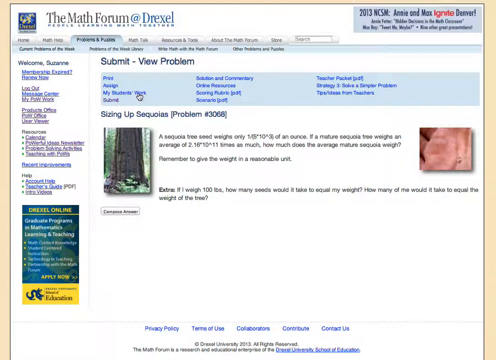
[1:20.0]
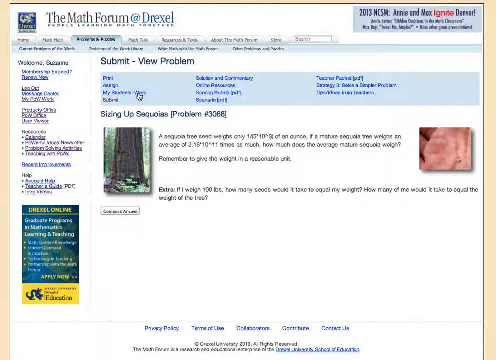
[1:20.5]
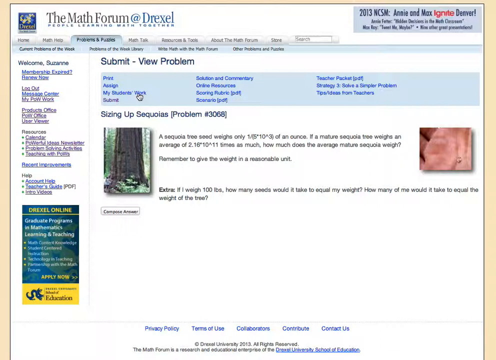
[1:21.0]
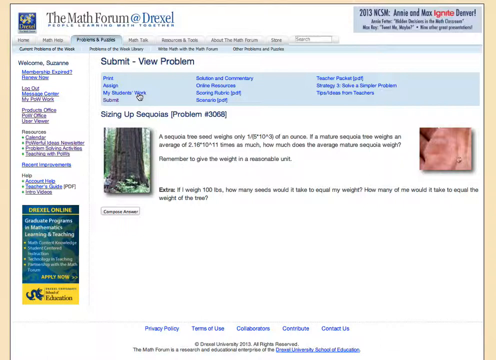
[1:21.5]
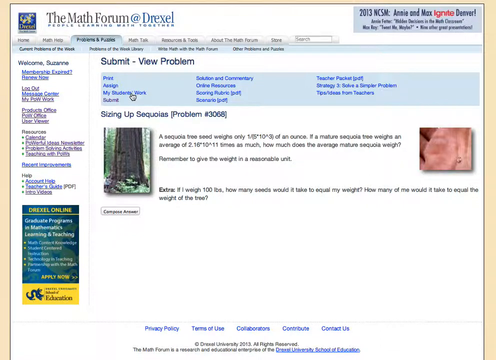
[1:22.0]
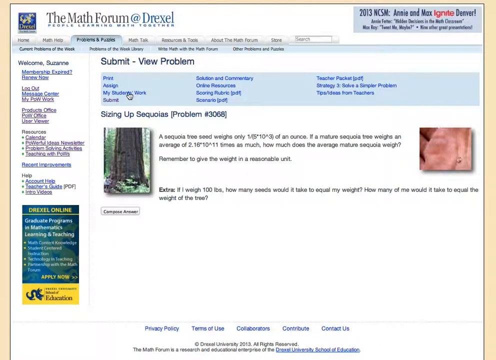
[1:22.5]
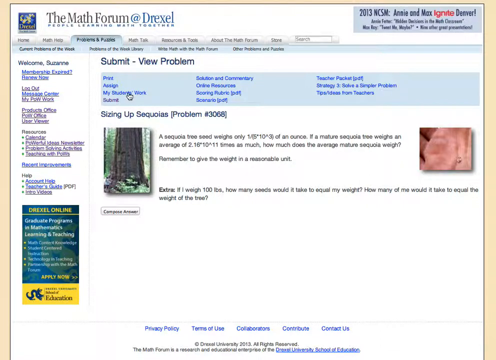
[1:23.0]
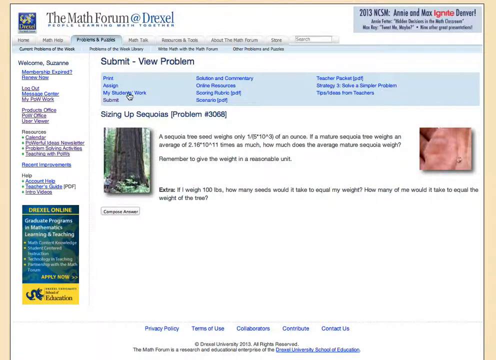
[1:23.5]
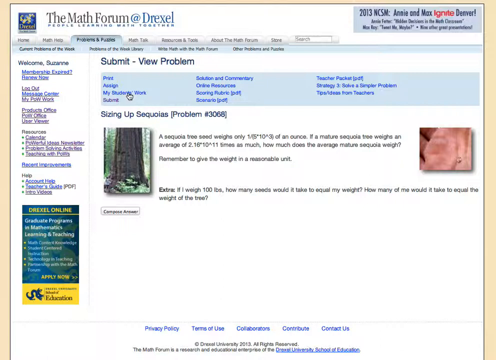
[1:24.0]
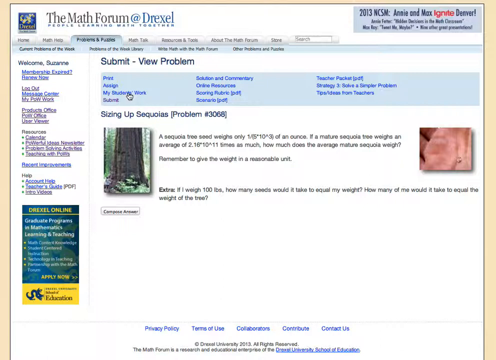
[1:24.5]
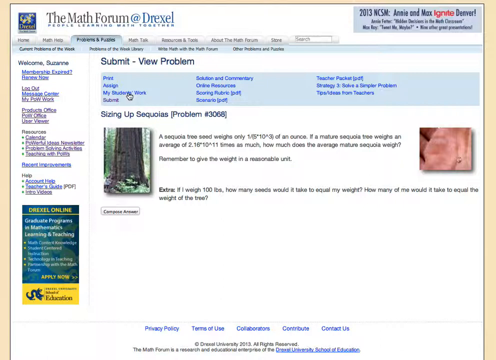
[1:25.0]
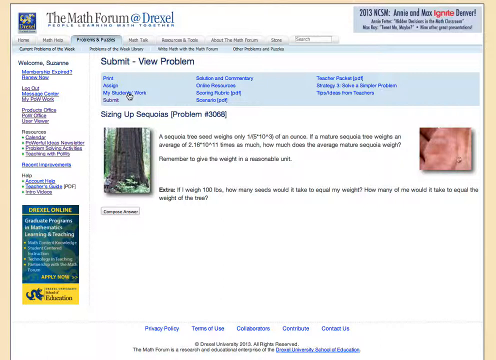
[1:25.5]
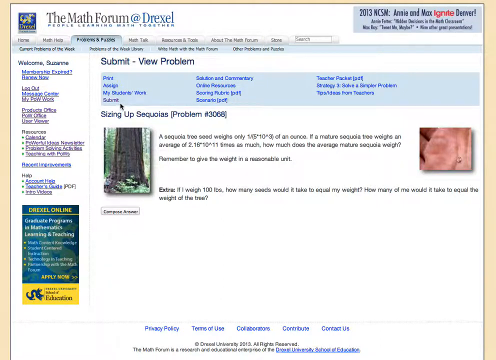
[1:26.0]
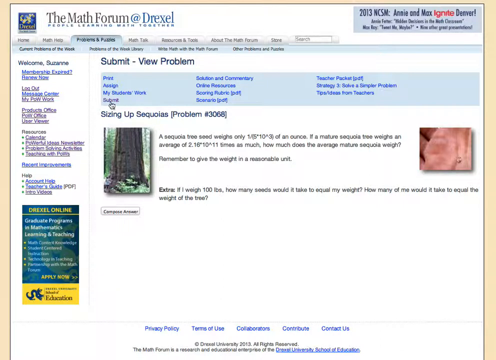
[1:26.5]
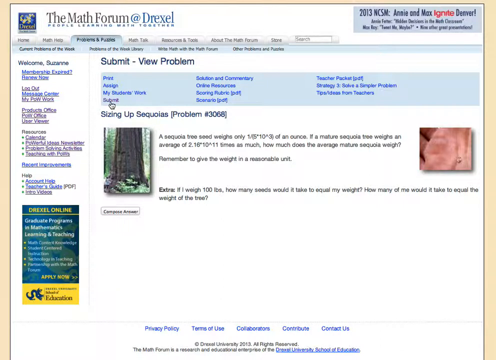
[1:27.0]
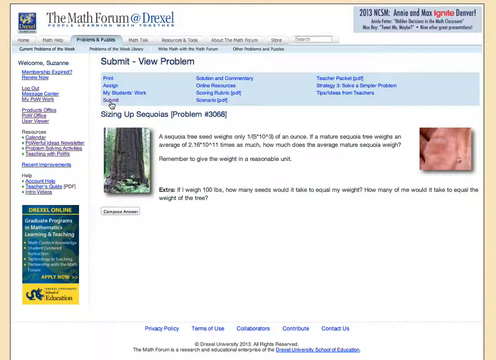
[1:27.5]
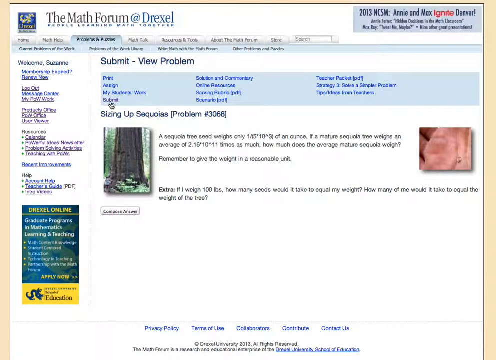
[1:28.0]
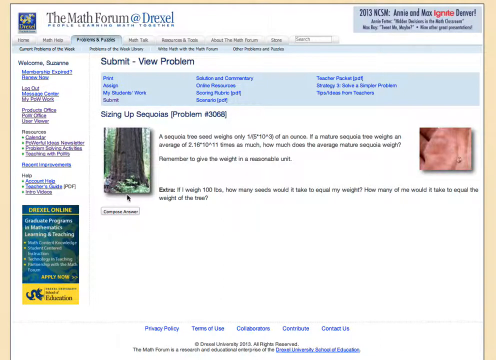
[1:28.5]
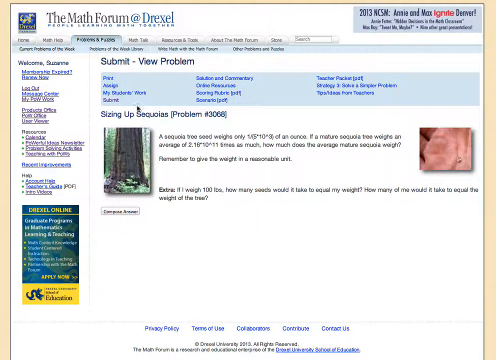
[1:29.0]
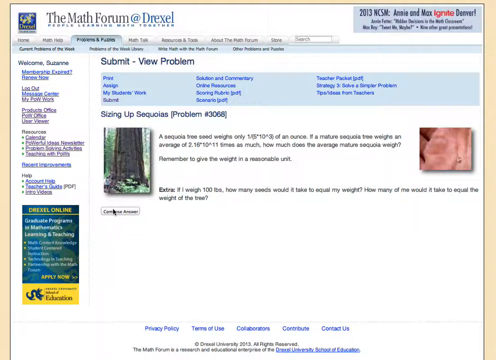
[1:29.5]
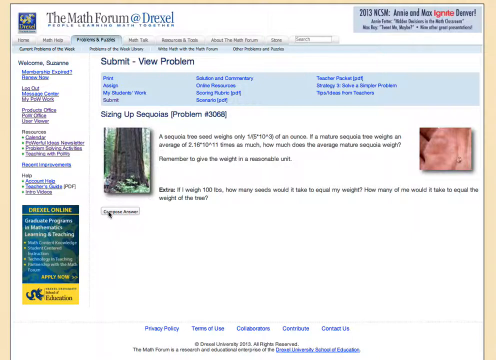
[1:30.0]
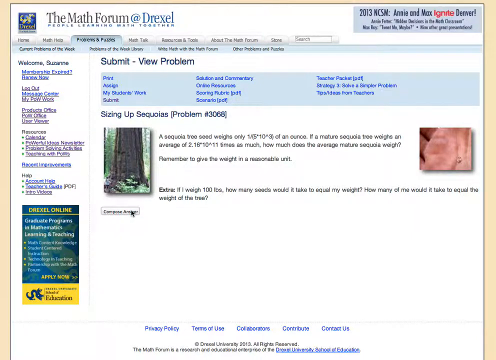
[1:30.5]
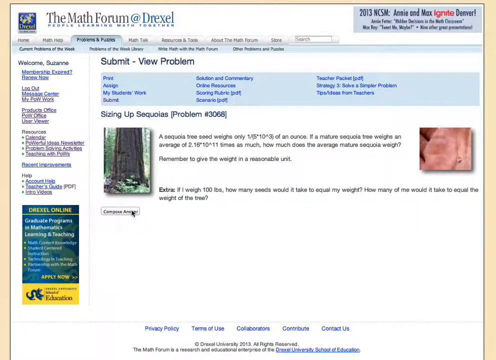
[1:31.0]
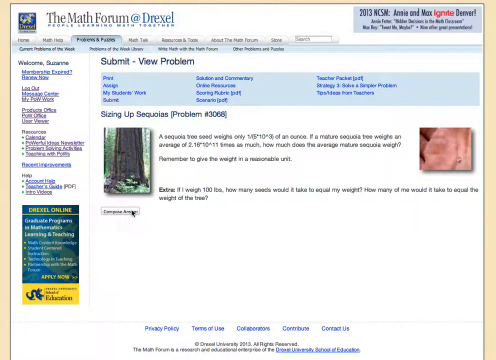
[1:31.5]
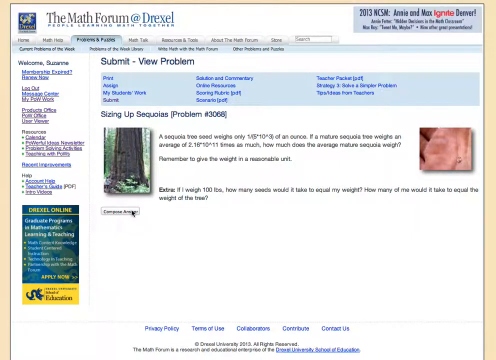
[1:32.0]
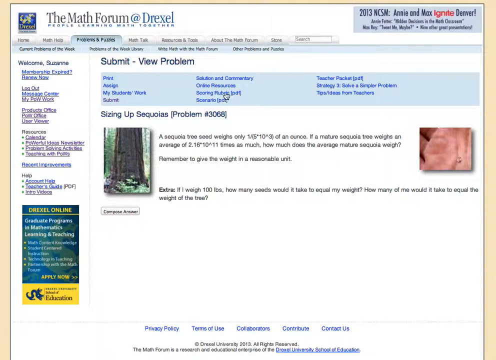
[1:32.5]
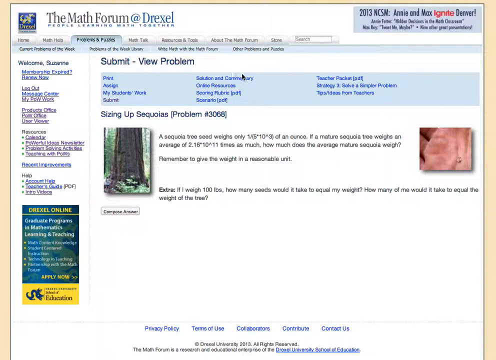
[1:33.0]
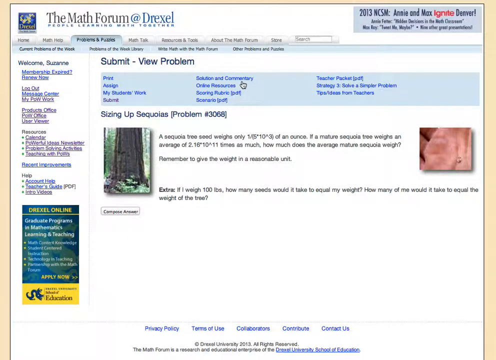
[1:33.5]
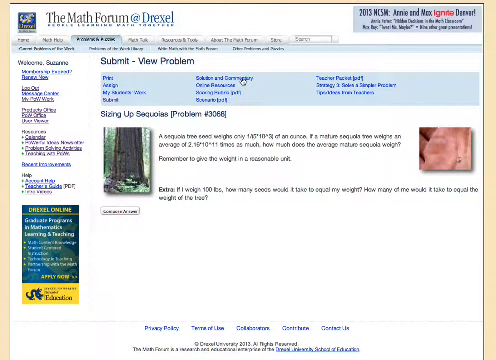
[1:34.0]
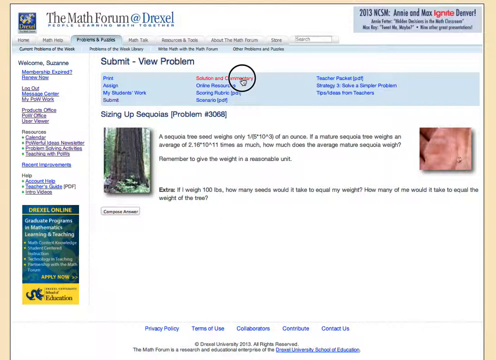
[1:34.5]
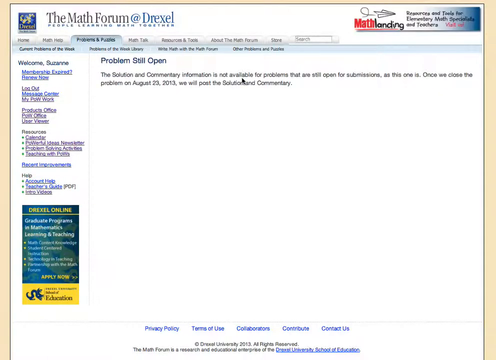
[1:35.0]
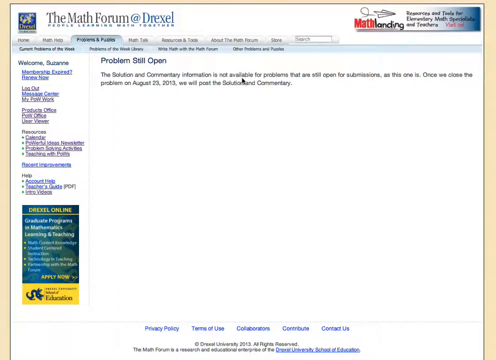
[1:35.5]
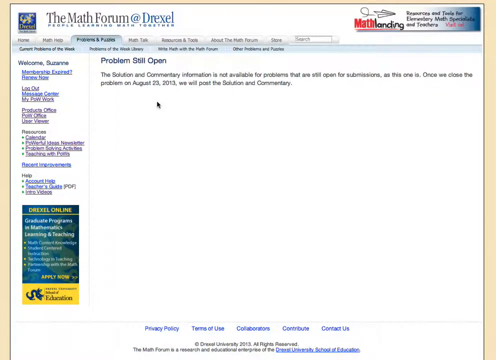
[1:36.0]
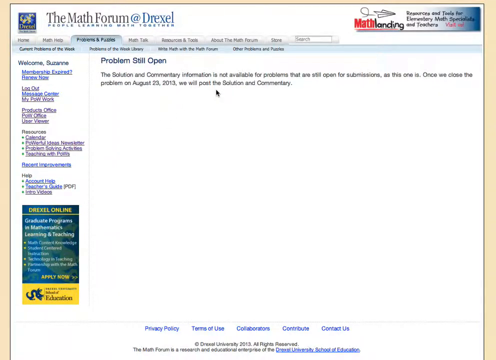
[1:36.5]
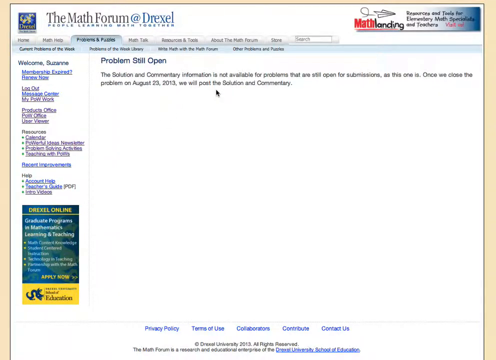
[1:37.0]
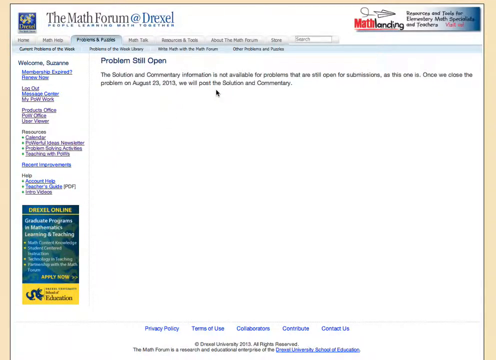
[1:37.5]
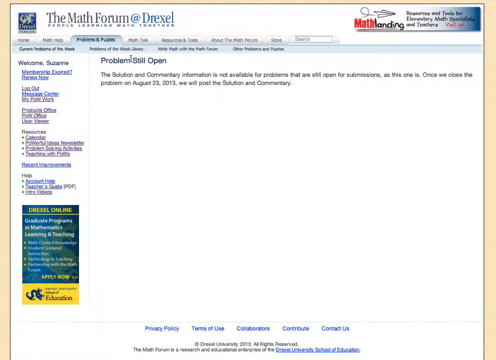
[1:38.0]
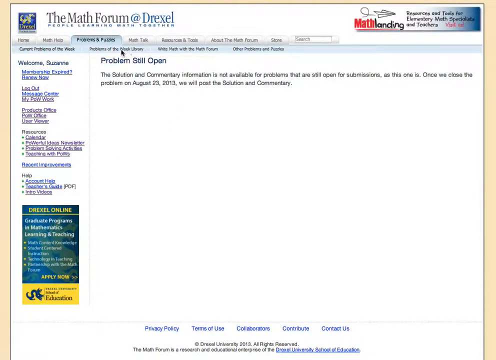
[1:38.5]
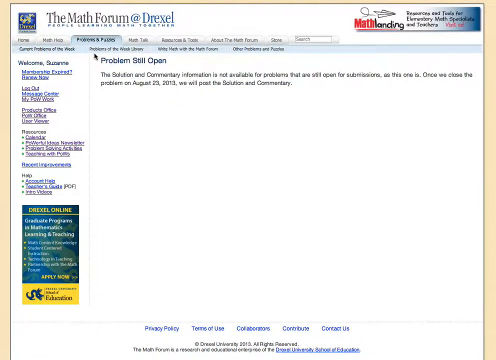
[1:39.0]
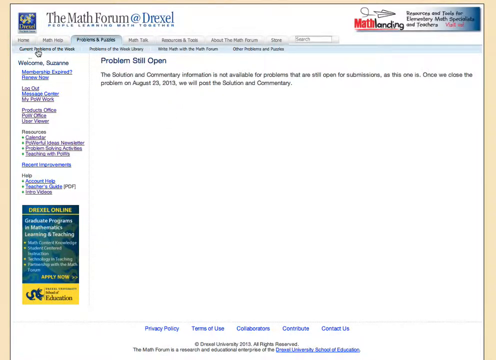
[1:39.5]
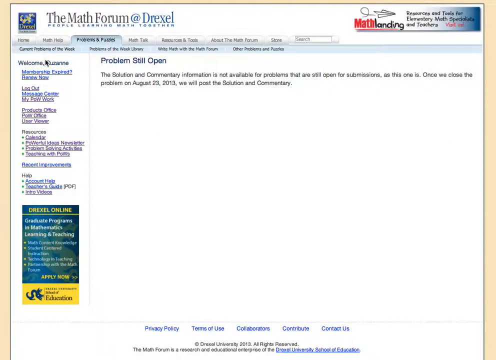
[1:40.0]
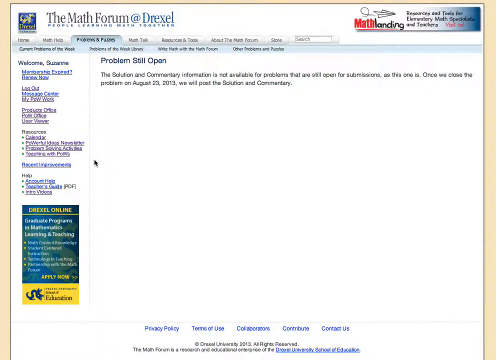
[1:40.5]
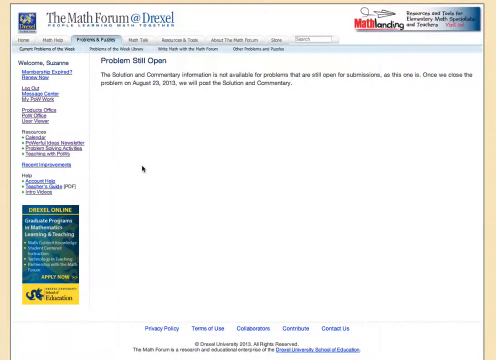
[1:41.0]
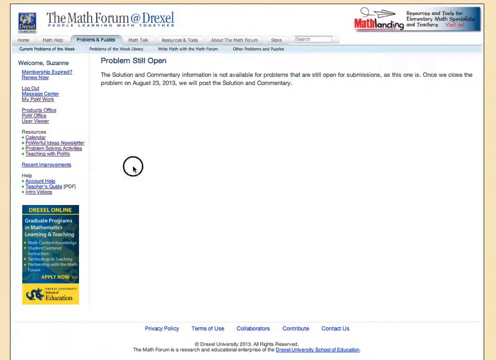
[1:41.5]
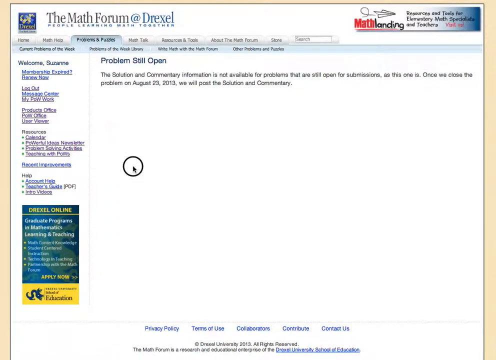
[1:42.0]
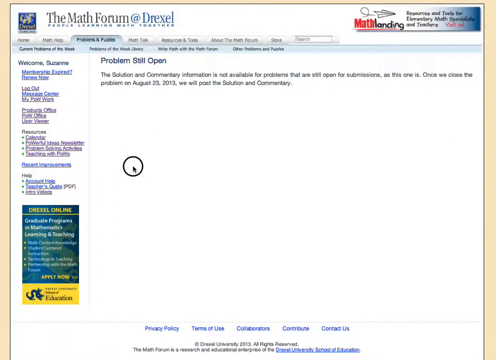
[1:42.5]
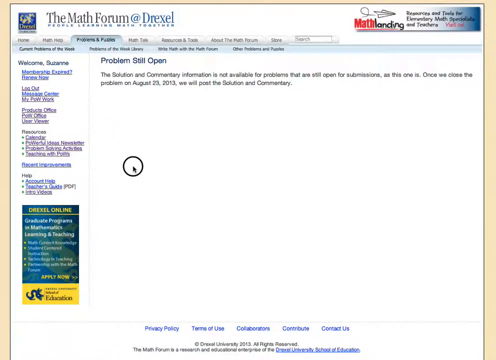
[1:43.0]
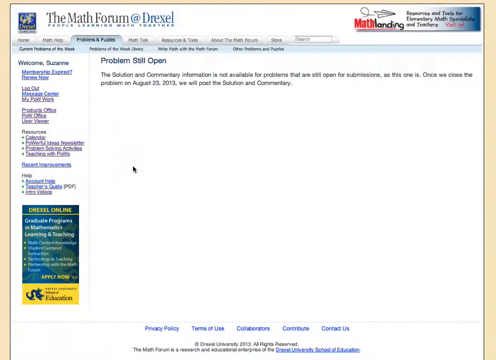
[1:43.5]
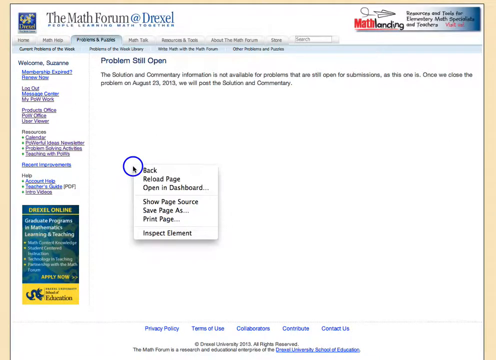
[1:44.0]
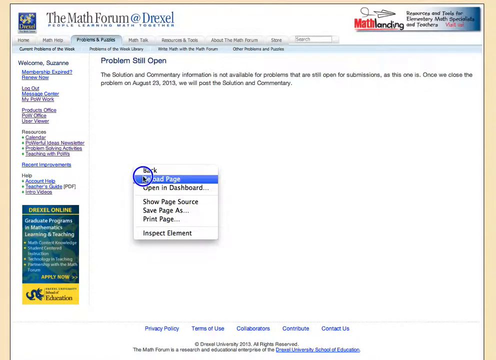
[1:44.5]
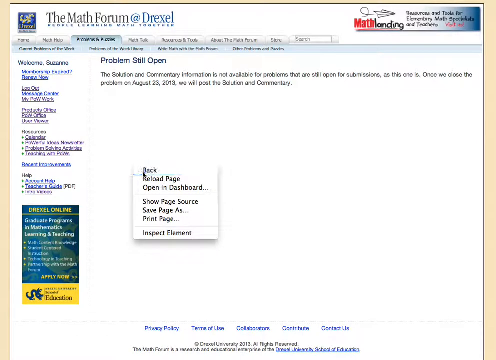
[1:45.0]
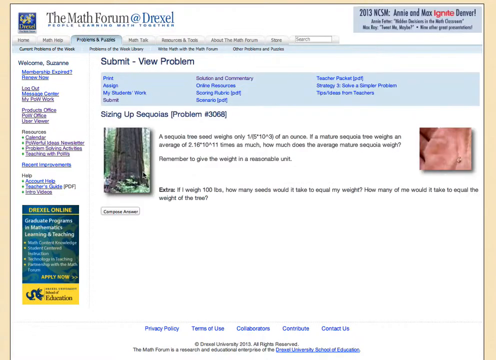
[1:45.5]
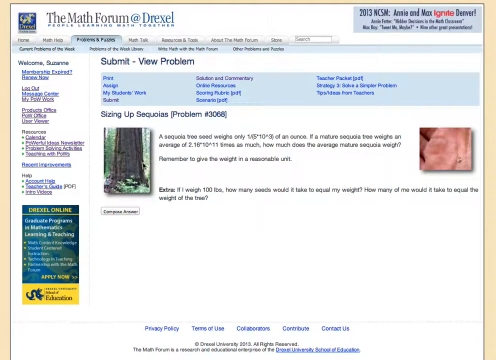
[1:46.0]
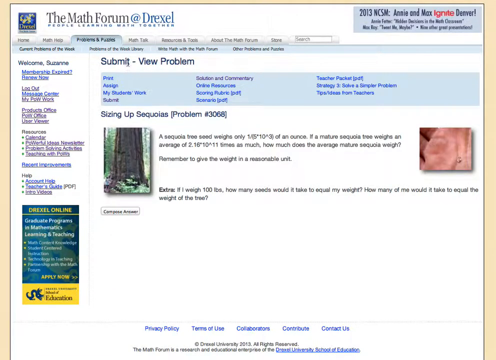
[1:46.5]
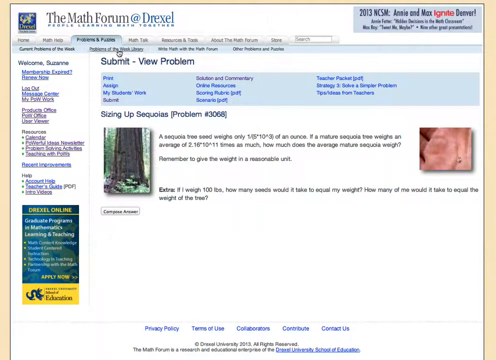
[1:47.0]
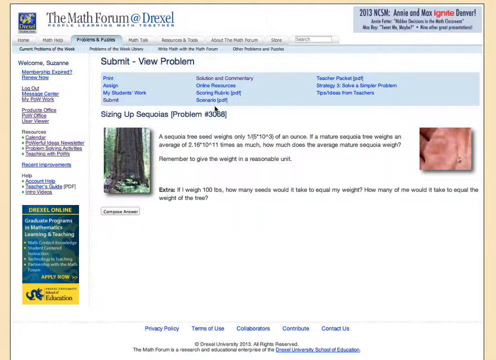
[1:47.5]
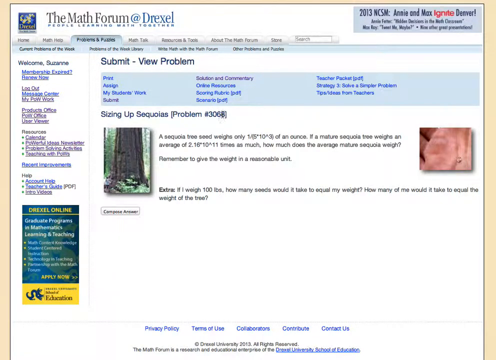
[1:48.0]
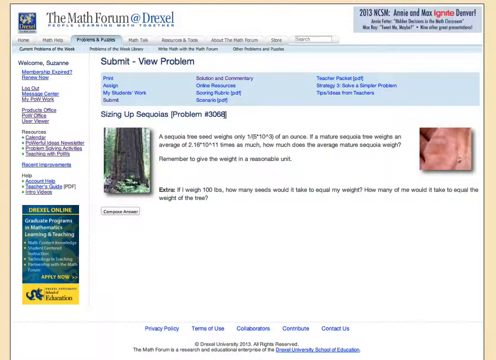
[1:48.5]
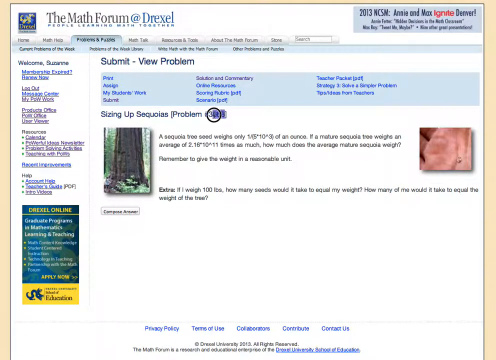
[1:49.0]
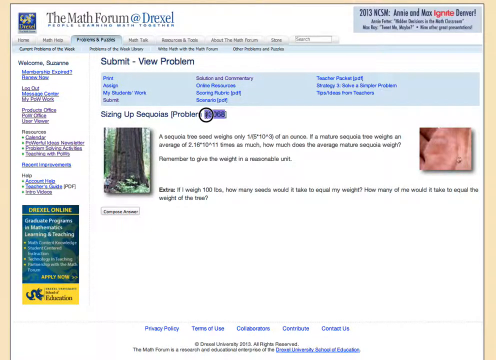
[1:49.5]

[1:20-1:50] A webpage with a mostly white background is shown in poor resolution, so only some words can be made out. At the top left corner of the screen it says "the Math Forum at Drexel. People learning math together." In the top right corner it says "2013 NCSM Annie and Max Ignite Denver," with more text below that cannot be read. Below this text is a tab menu: the far left tab says "Home," the second says "Math Help," the next apparently says "Problems and Puzzles," the next says "Math Talk," the next is unreadable, the one after that says "About the Math Forum," and the farthest right says "Store." A search bar is to the right of that tab. Below this area, in the center of the screen, it says "Submit View Problem," "Sizing up sequoias," and "Problem number 3068."